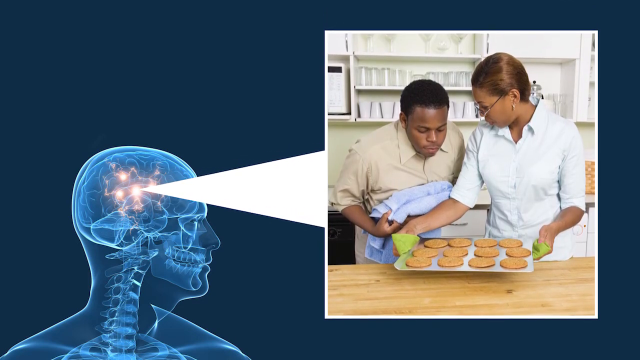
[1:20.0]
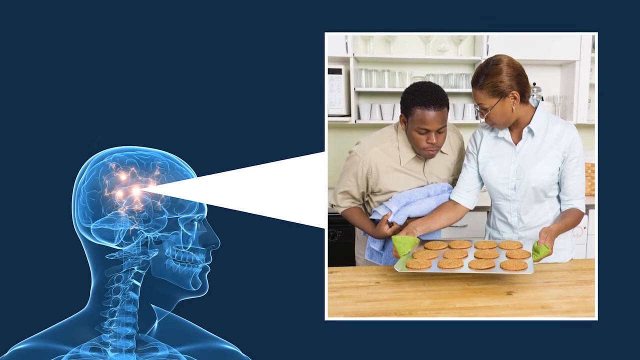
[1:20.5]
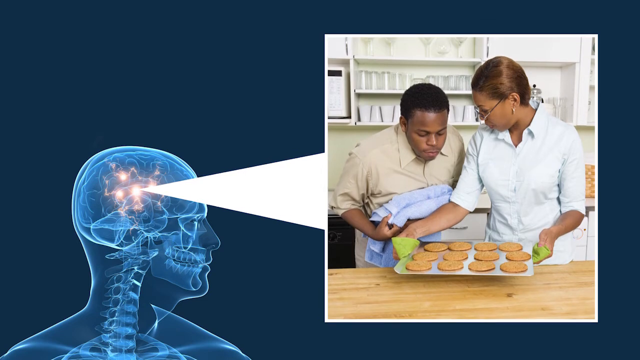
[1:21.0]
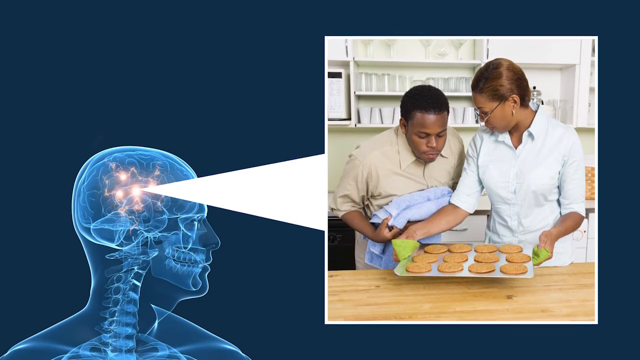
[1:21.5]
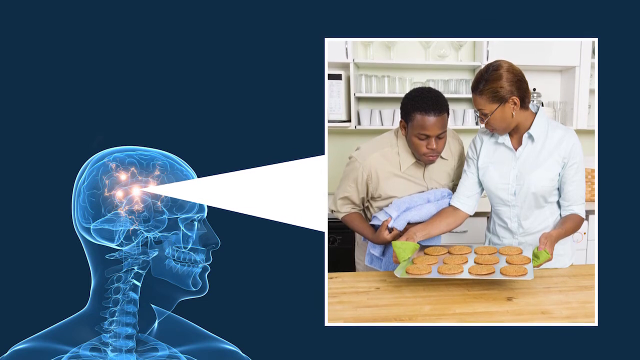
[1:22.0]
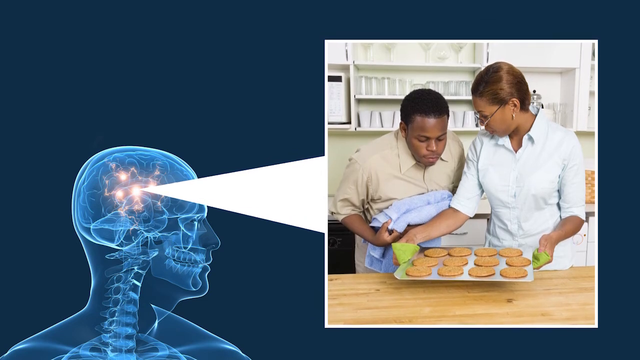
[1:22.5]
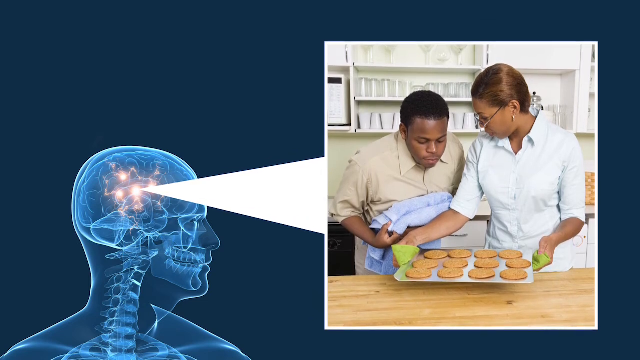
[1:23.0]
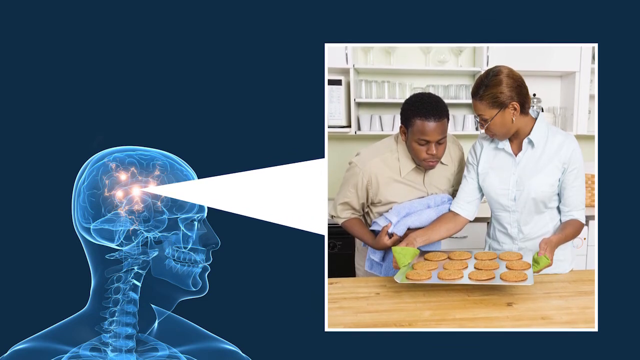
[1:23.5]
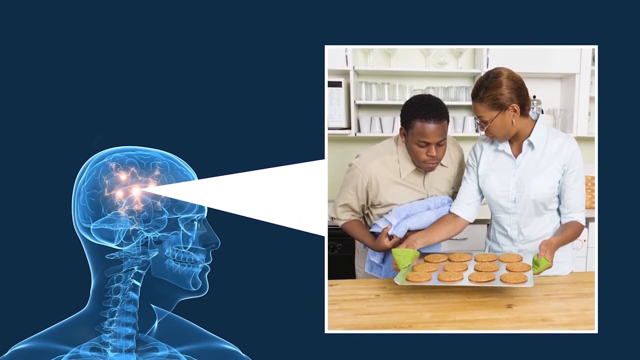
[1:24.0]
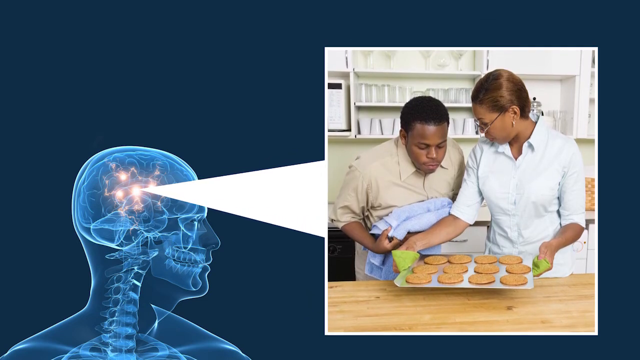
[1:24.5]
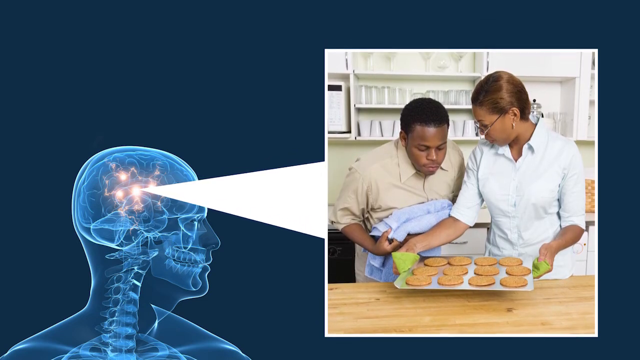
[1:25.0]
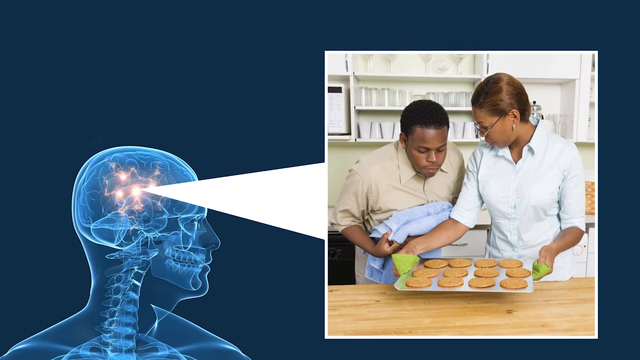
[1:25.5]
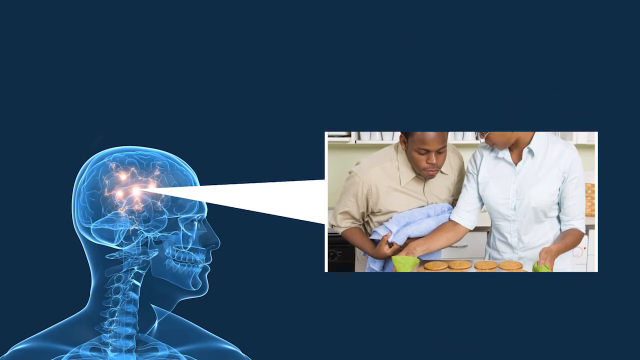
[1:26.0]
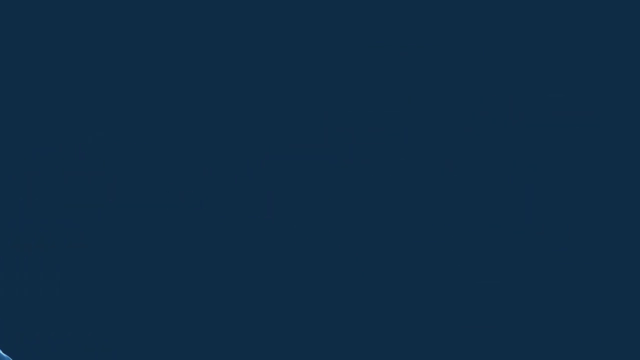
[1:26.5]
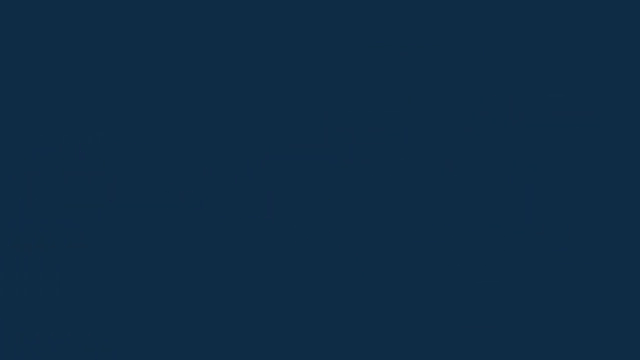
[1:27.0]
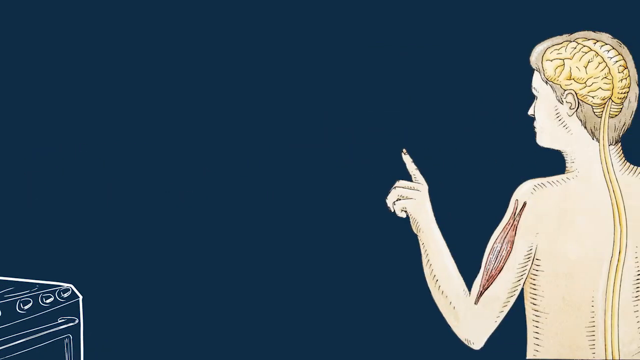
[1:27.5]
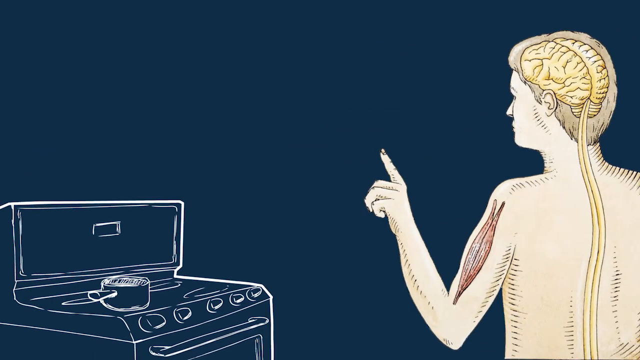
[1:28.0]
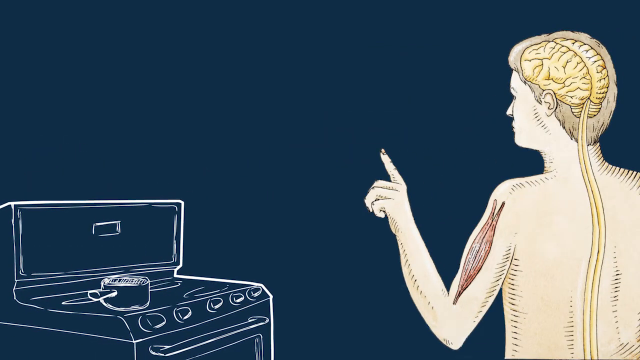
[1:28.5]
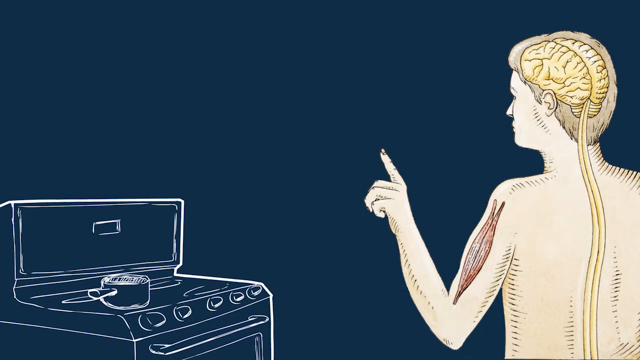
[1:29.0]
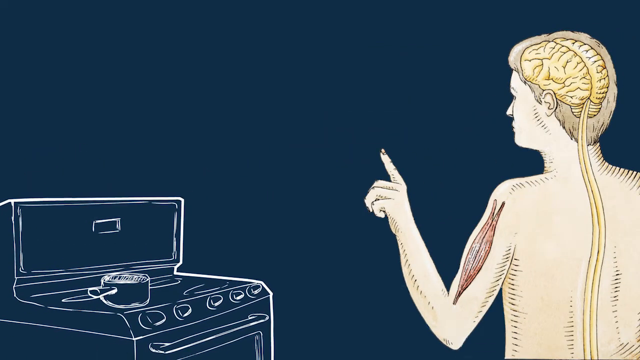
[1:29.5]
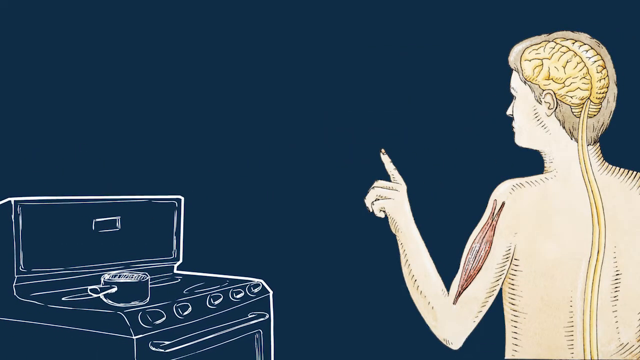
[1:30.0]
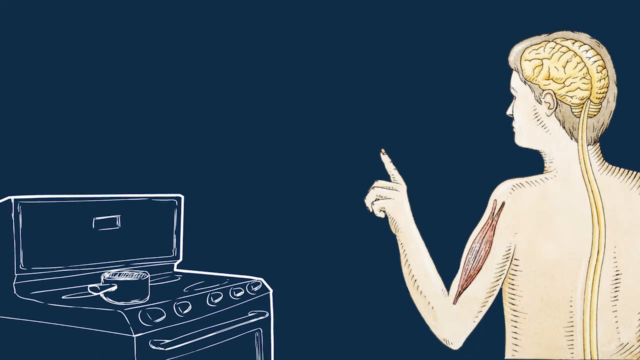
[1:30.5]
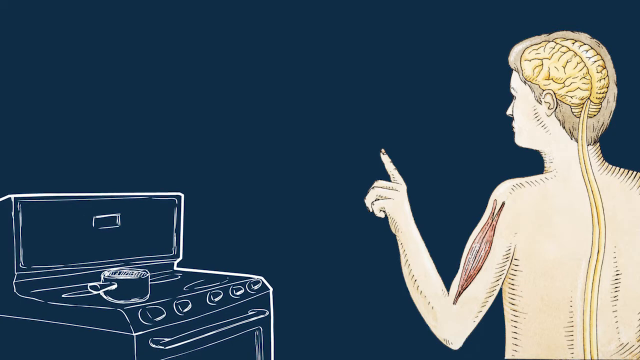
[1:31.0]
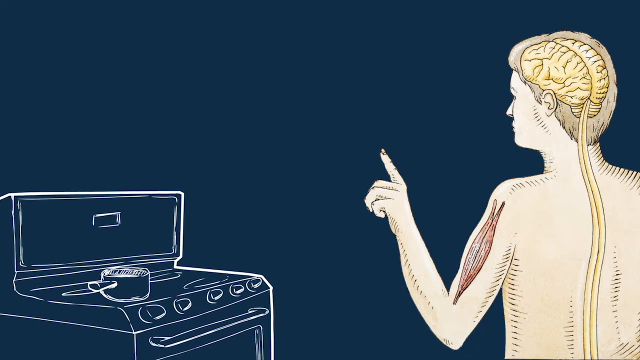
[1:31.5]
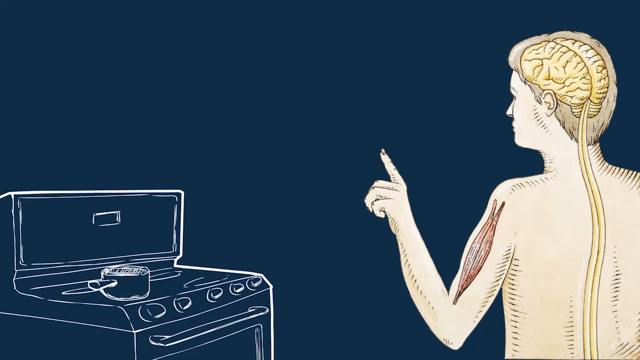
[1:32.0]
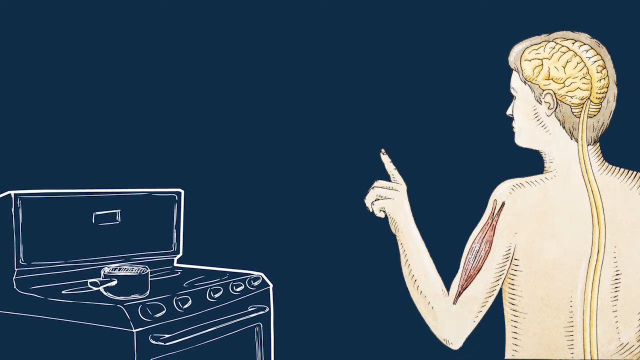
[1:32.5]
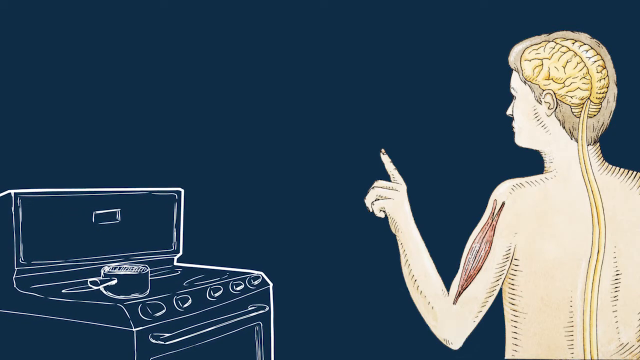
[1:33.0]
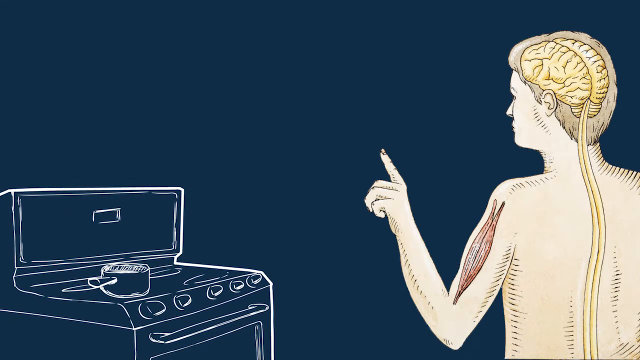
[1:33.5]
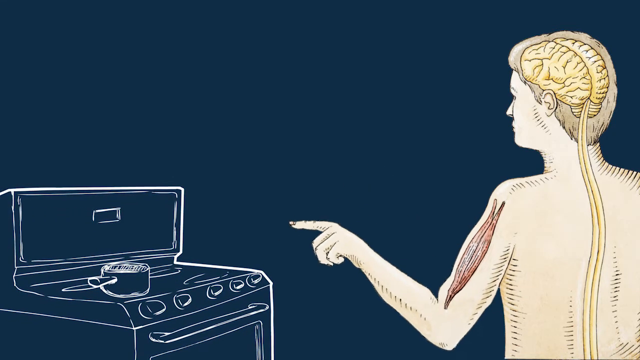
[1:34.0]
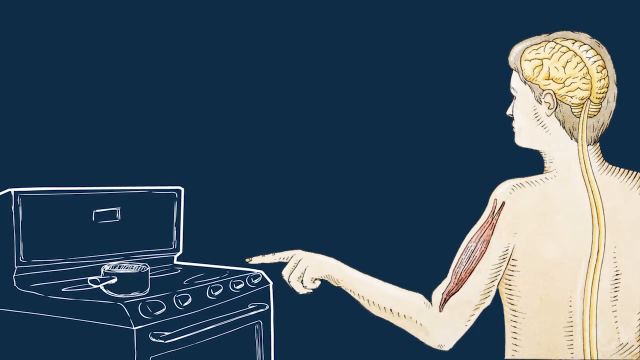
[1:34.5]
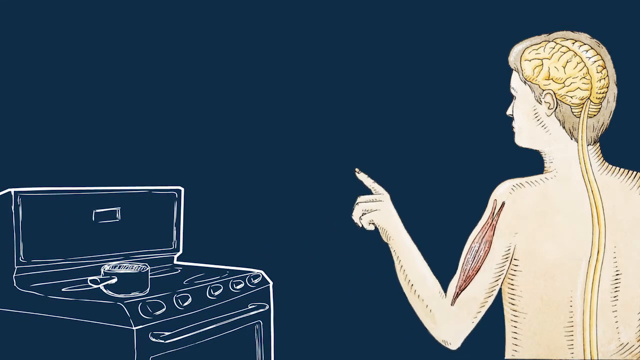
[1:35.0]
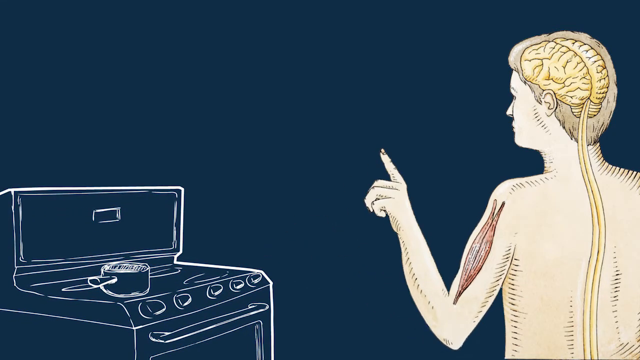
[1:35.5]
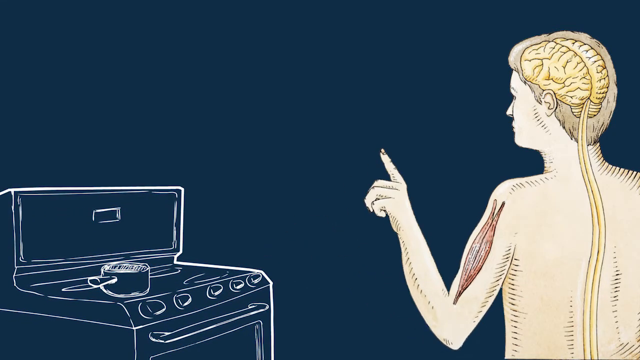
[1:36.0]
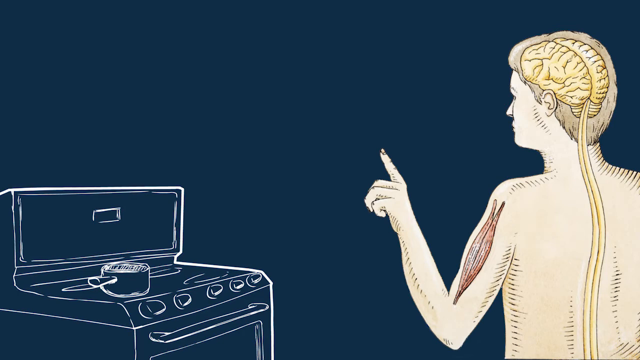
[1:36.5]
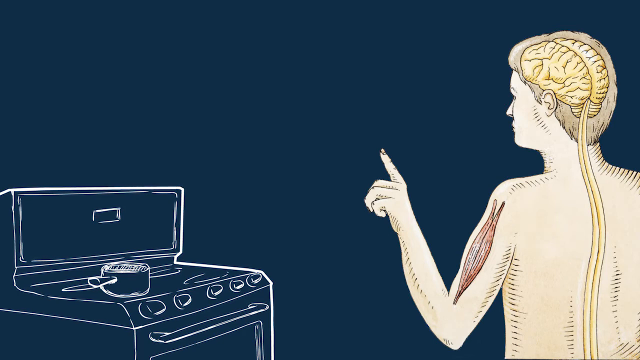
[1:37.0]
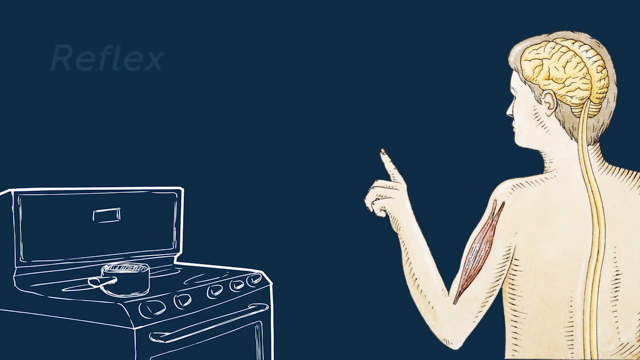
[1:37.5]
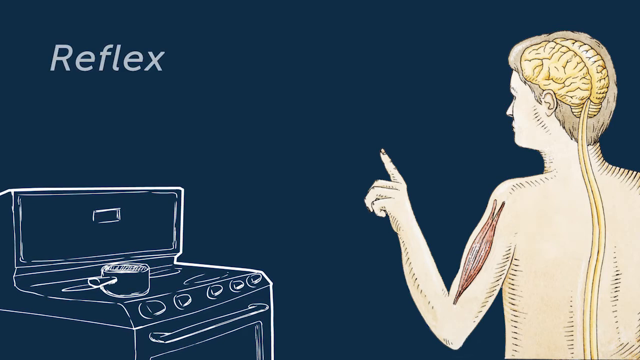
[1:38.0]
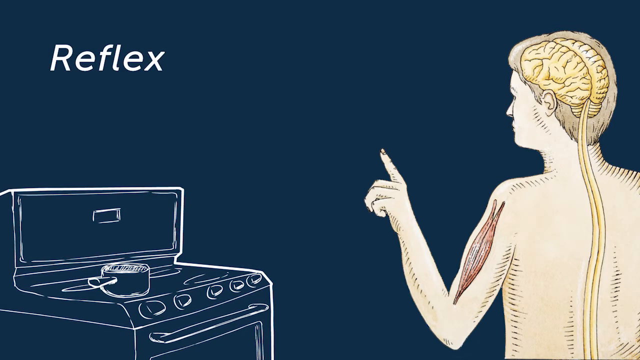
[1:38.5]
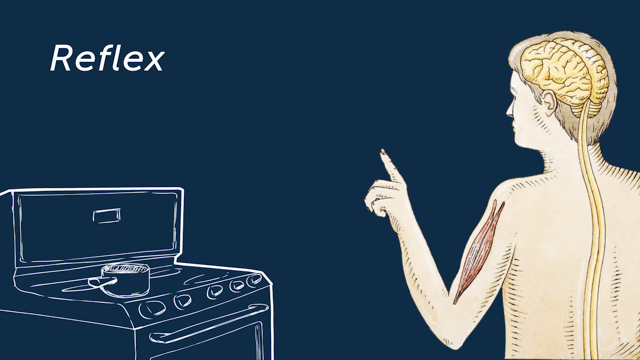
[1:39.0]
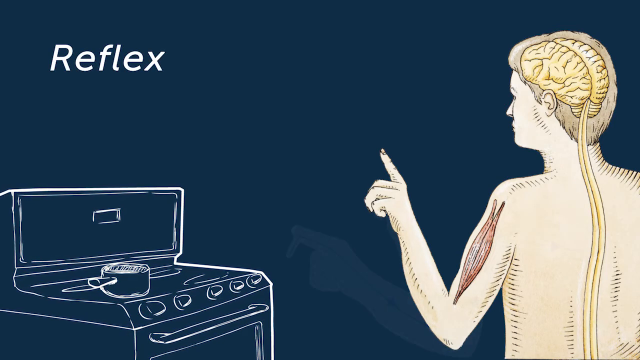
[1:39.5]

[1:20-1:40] The cookies look beige, and the woman holds the tray at either side with a green cloth underneath it. The man leans over the tray, looking at the cookies, and holds a blue towel in both hands. A new screen follows with a blue background. On the right is a body showing the hairline as well as the brain and spinal cord. Its left arm is bent at the elbow into a V shape, with the finger pointed up toward the top left corner of the screen. In the bottom right corner is a sketch drawing of a cooker top with a pan on one of the rings. The person on the right leans forward and touches the ring with their finger, and the word "reflex" pops up in the top left corner of the screen.